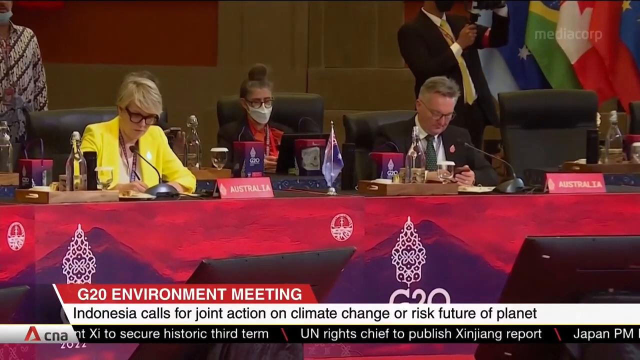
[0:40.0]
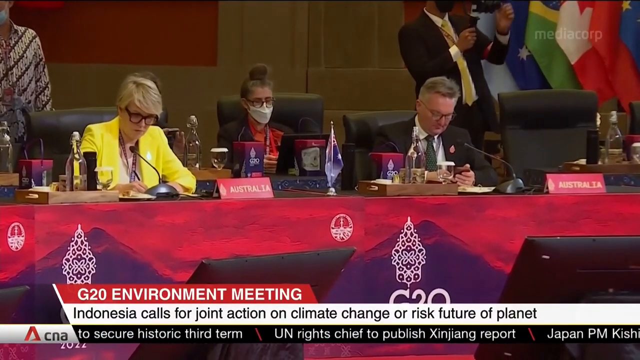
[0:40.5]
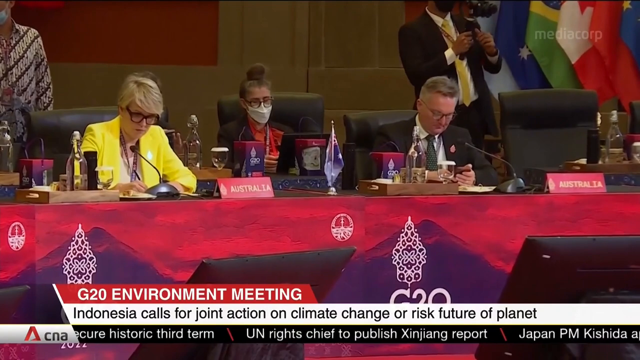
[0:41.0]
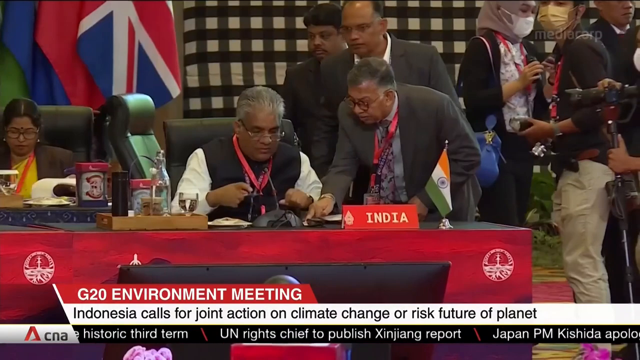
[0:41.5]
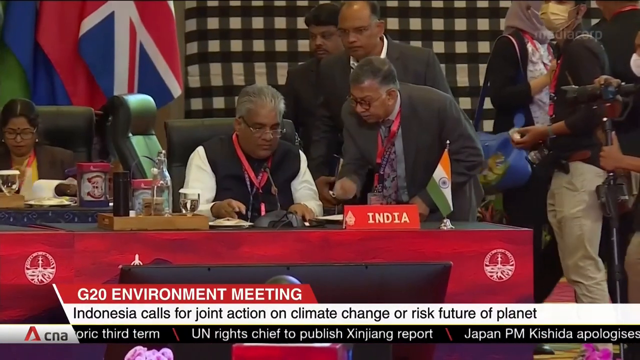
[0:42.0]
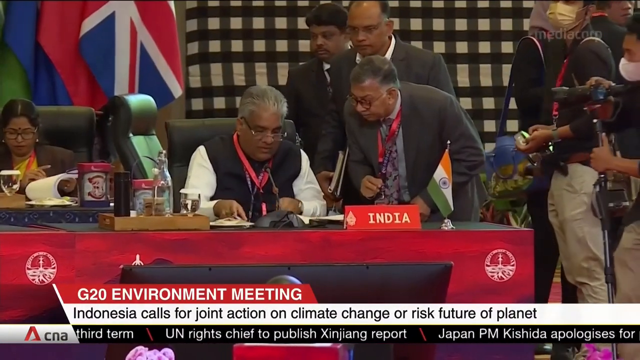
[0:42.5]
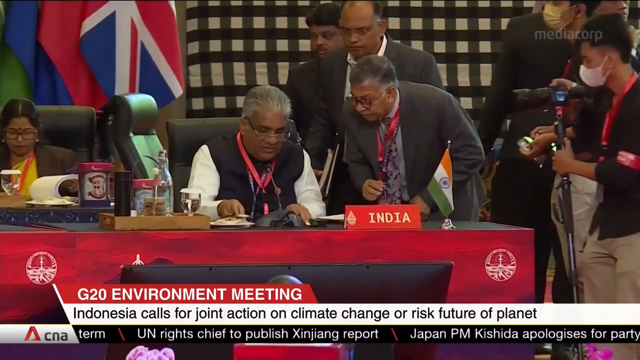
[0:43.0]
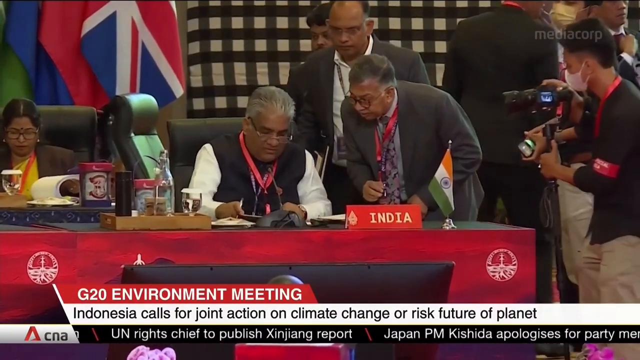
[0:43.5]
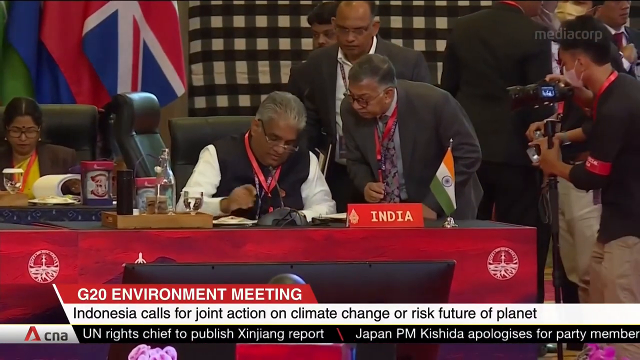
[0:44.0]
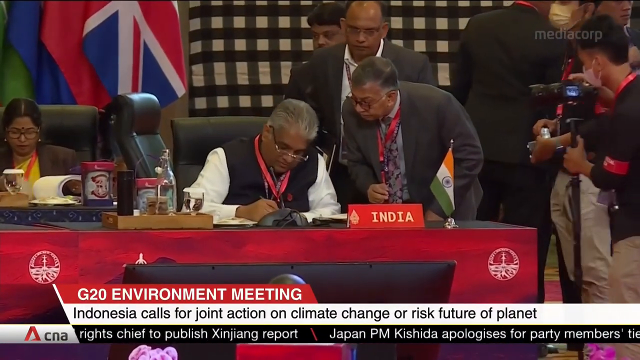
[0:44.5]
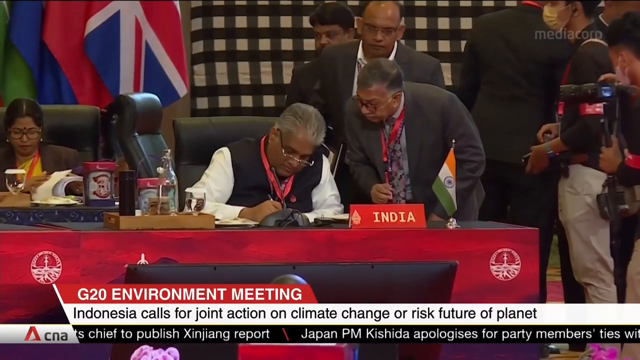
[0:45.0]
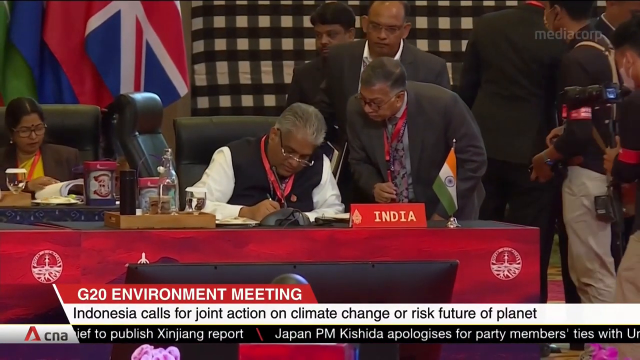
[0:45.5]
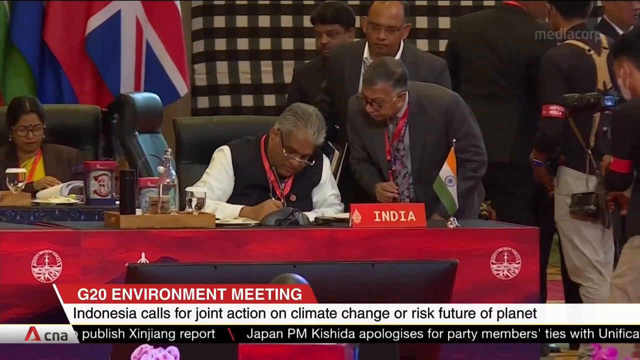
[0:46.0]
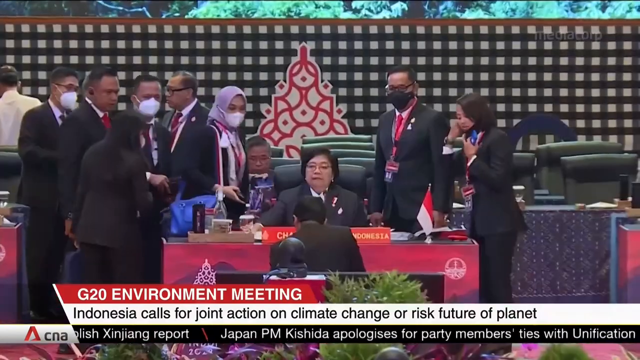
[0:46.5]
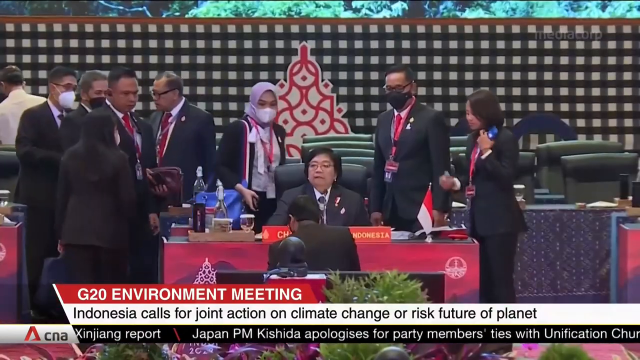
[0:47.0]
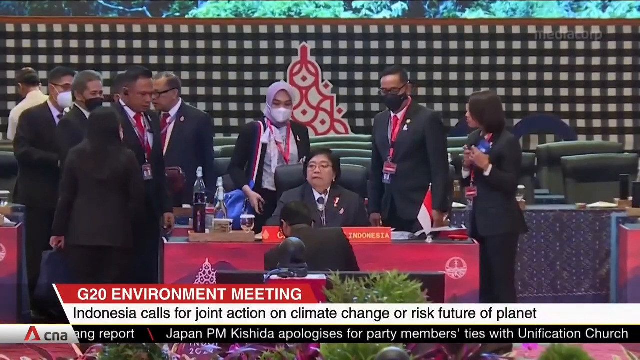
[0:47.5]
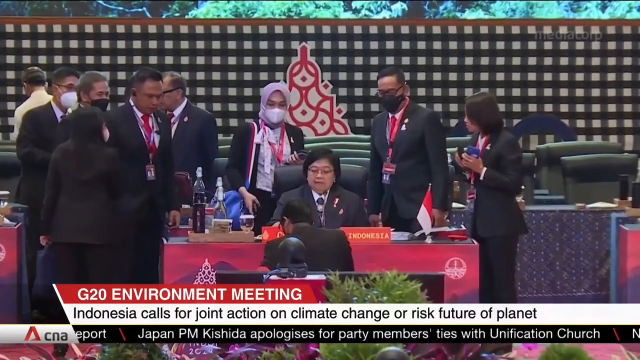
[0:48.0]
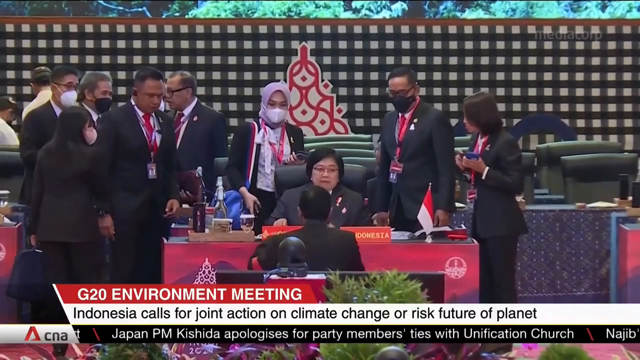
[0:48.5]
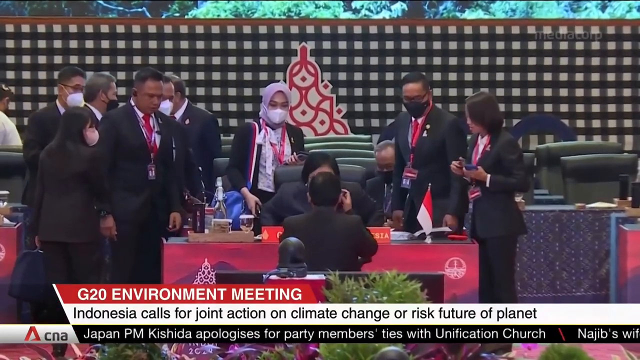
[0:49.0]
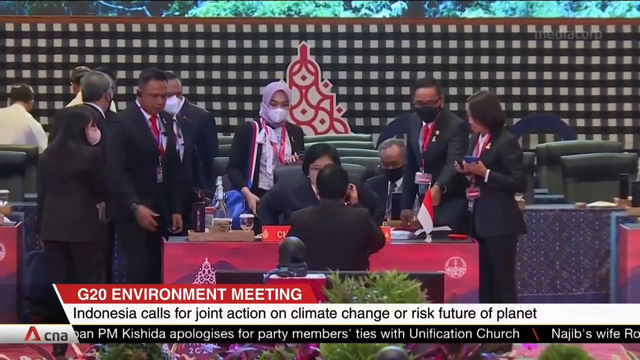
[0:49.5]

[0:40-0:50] After lingering on the Australian representatives, the video cuts to the representatives from India. There appears to be an older man sitting in a chair in front of a sign stating the country he represents, with a small Indian flag next to it. Multiple people, possibly assistants, are behind him, leaning over and speaking to him. Behind him, at a different table, a woman who appears to be Indian, half out of frame, flips through the notes of a book. The video cuts back to the Indonesian representatives, where several more people are now standing up and around the table, appearing to speak and shake hands with others there.